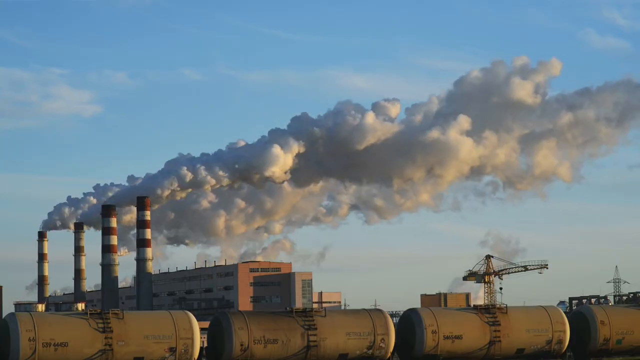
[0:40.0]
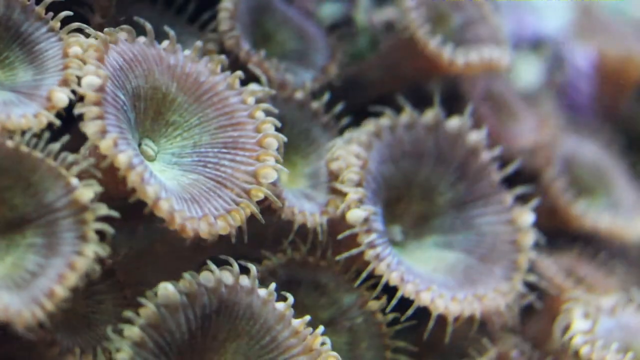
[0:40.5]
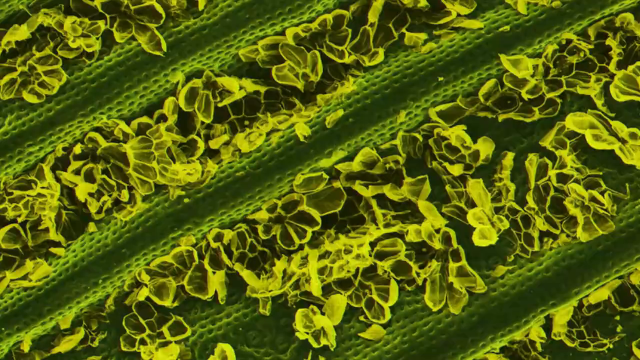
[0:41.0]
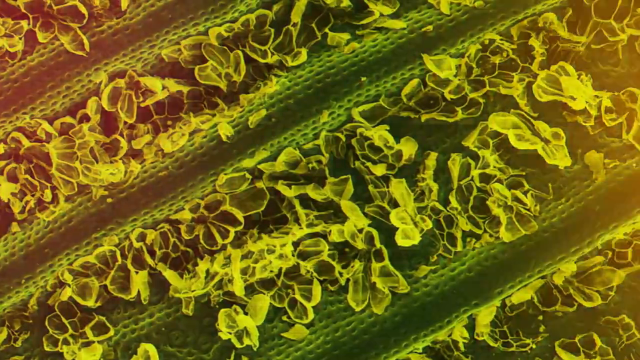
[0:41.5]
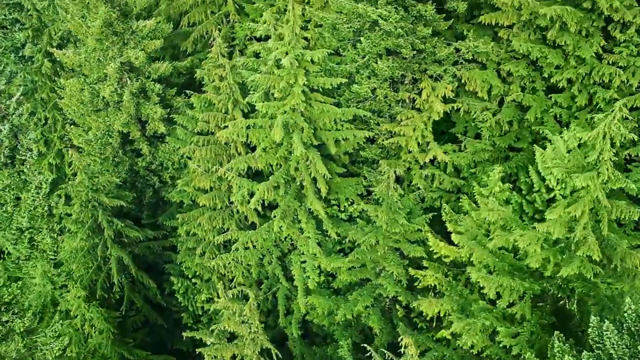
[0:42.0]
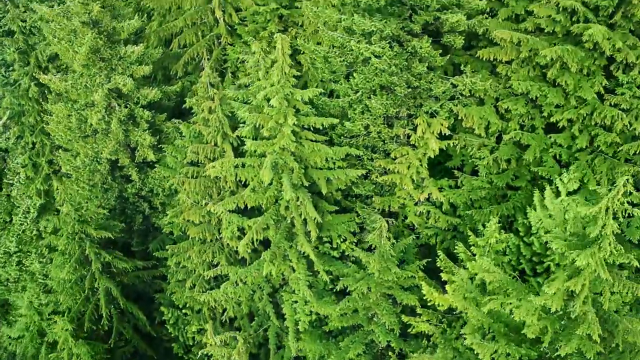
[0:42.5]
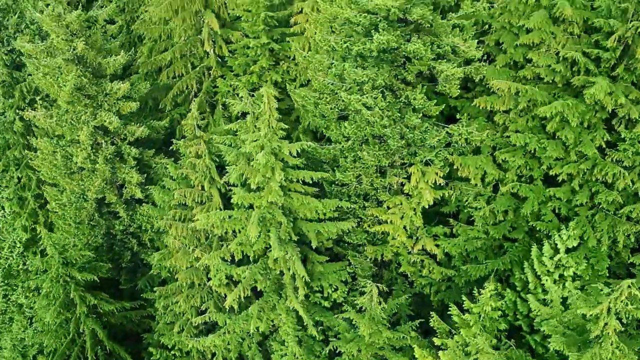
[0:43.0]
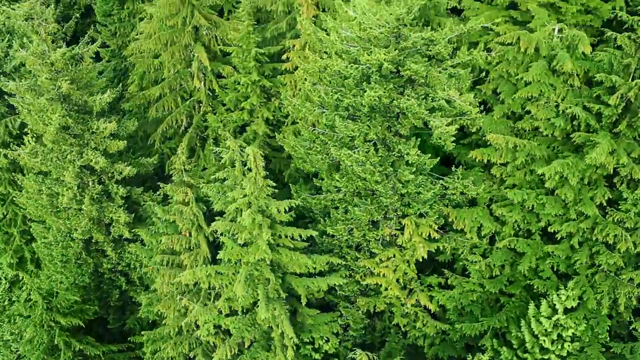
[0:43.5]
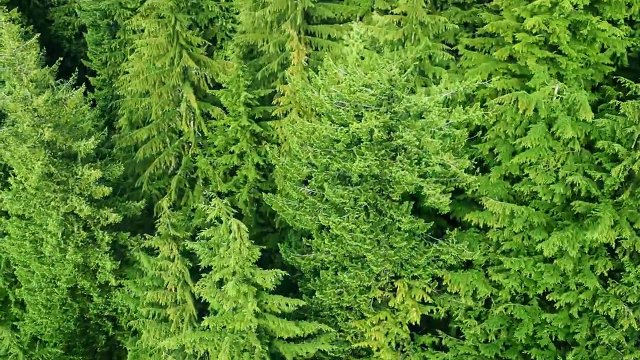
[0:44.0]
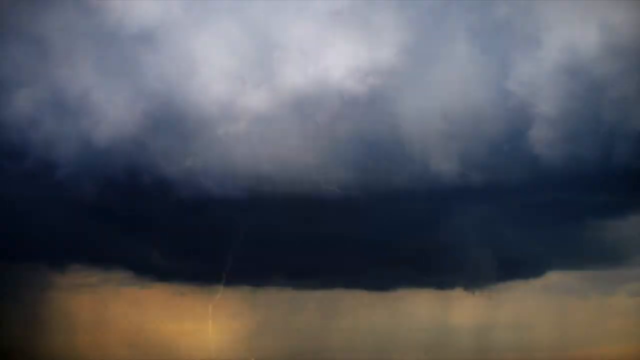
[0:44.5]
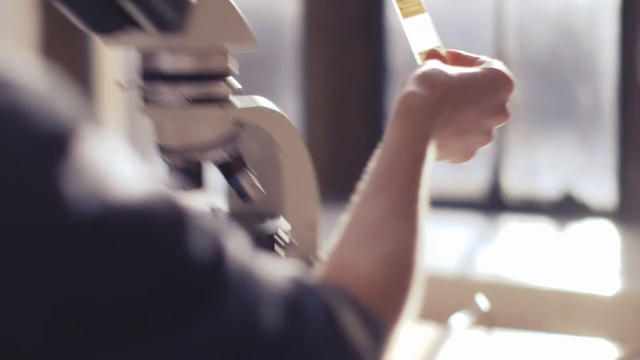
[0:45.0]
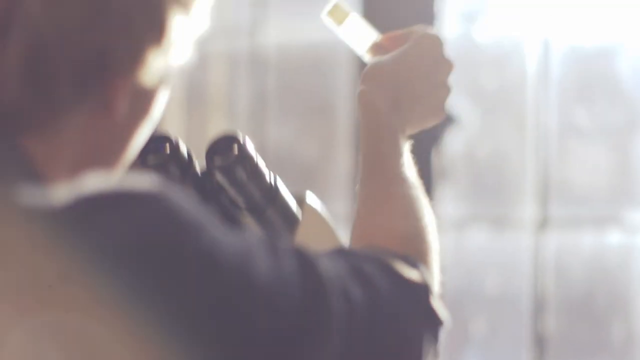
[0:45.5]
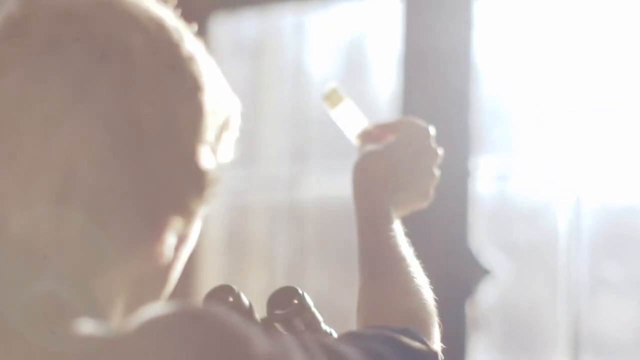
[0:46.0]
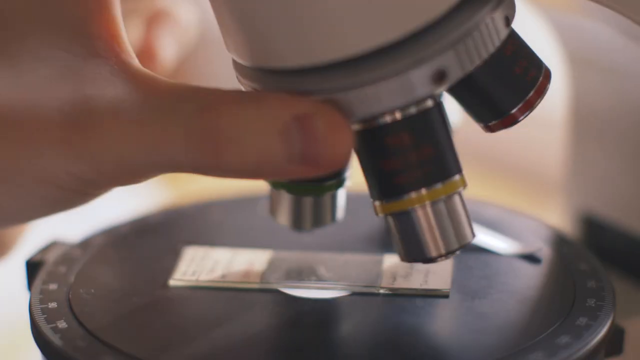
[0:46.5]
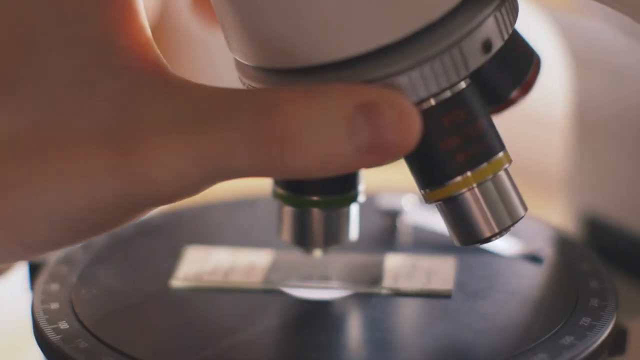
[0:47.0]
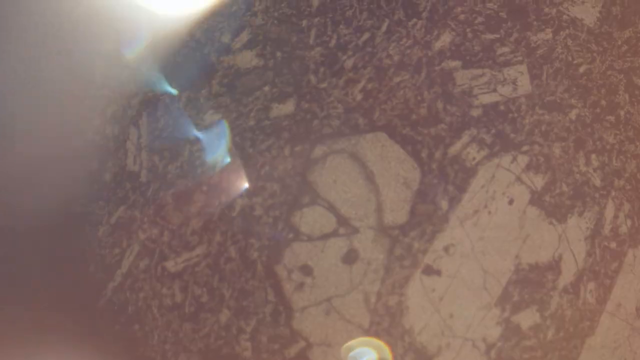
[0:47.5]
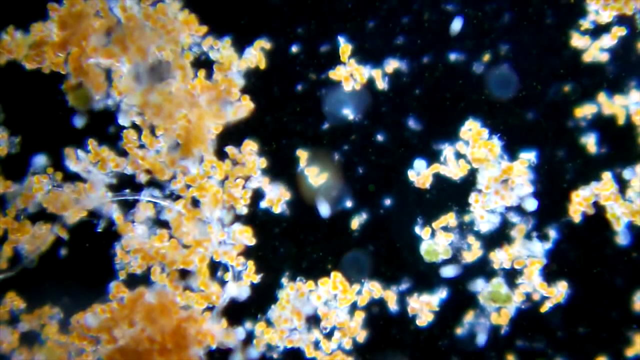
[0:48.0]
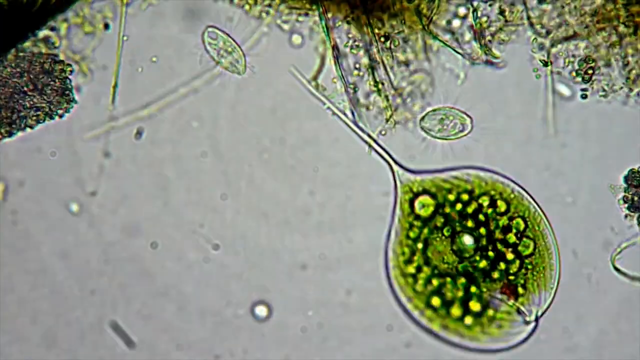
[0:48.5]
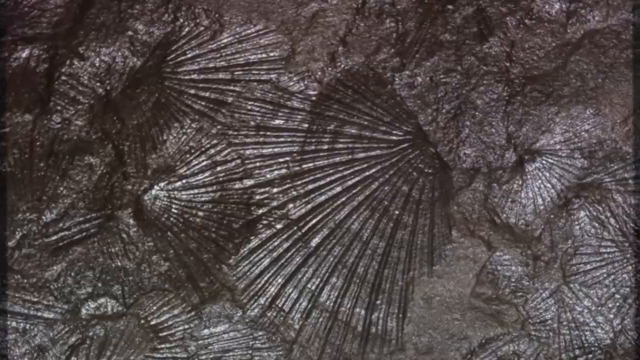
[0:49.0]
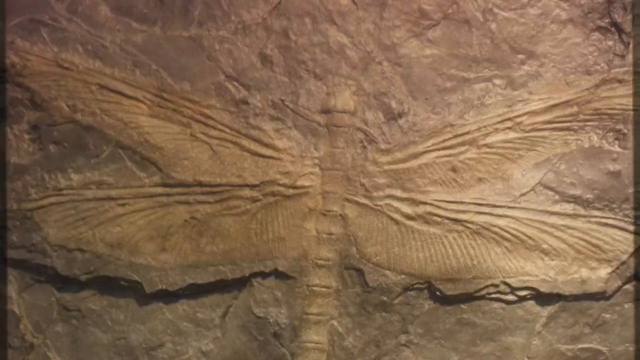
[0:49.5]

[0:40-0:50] A close-up shows what a leaf of a plant looks like, followed by an overhead view of a forest with lots of evergreen trees and then a lightning storm. The scene changes to somebody in a room with a microscope in front of them, holding a little piece of plastic up to the sun. They then use the microscope, turning the viewing part of the microscope at the bottom. Next there appear to be some cells and some amoebas, and then some fossils of butterflies.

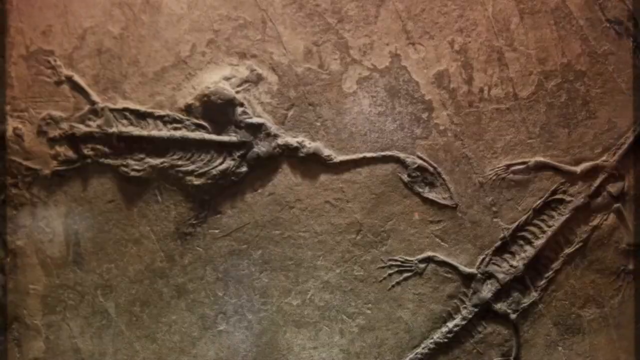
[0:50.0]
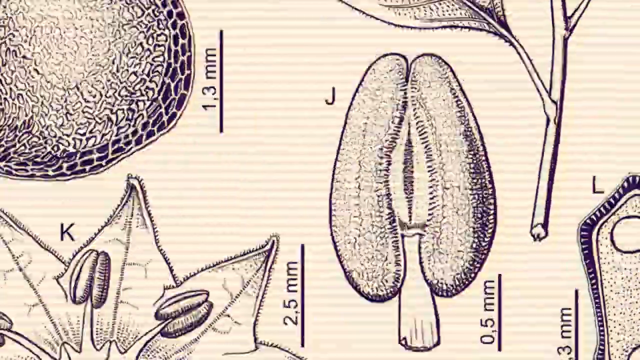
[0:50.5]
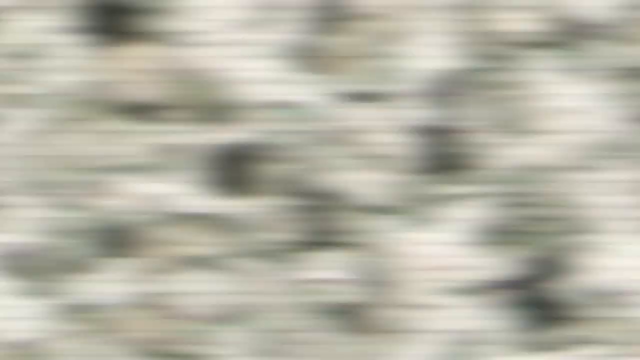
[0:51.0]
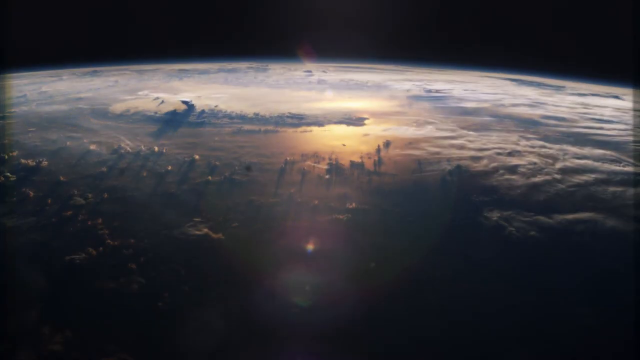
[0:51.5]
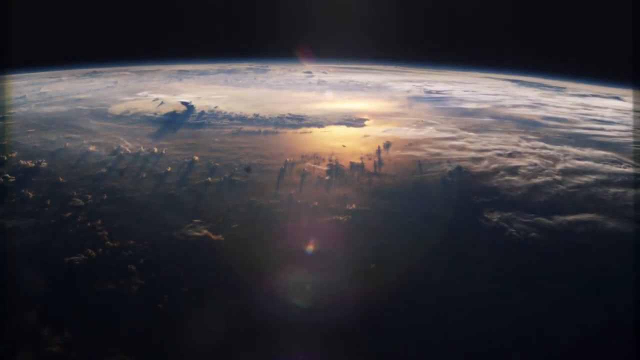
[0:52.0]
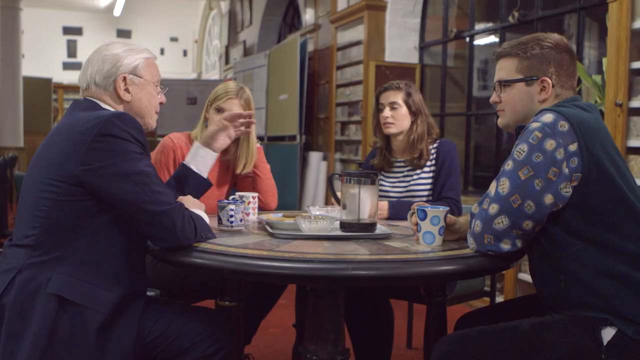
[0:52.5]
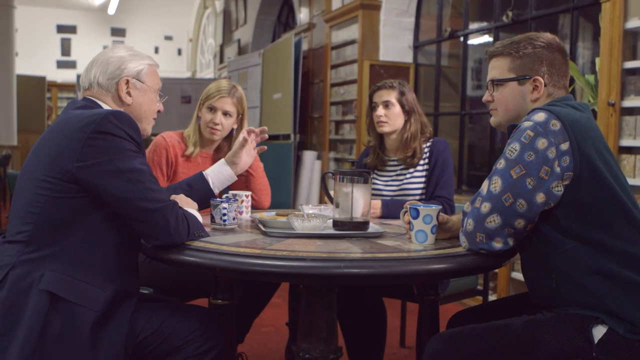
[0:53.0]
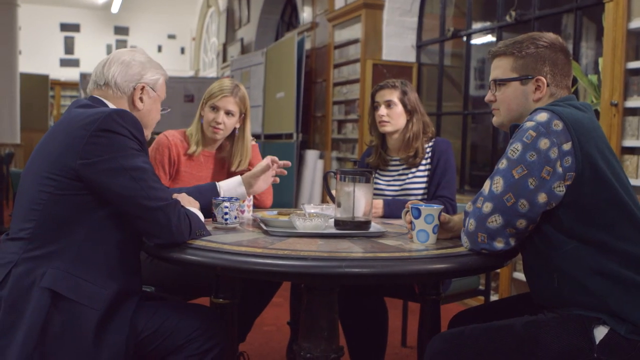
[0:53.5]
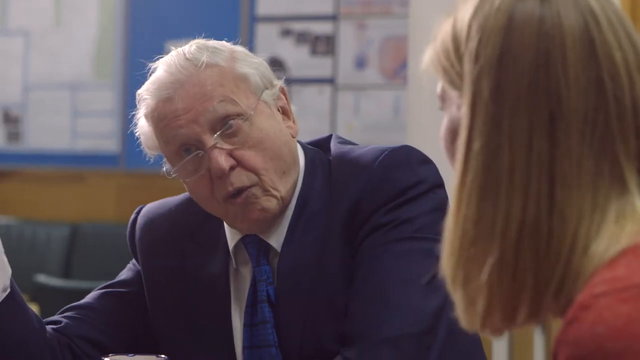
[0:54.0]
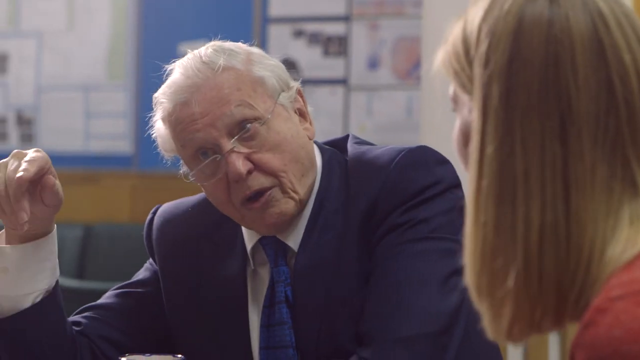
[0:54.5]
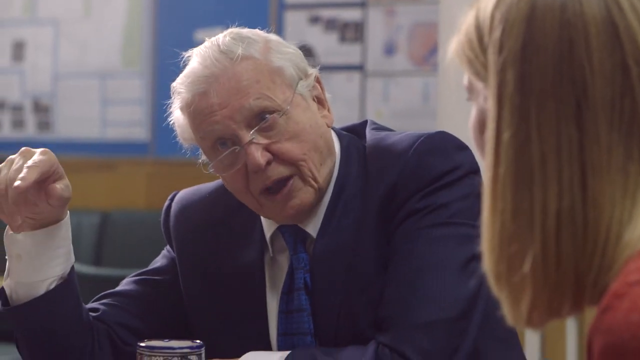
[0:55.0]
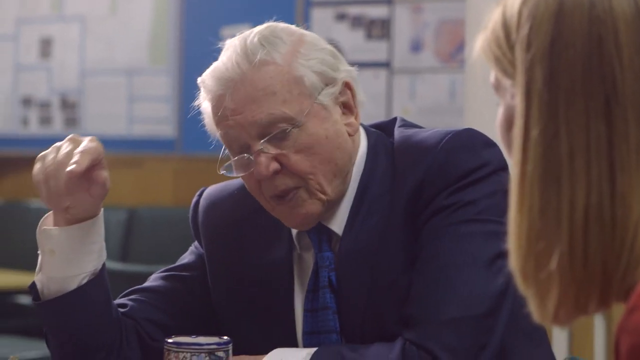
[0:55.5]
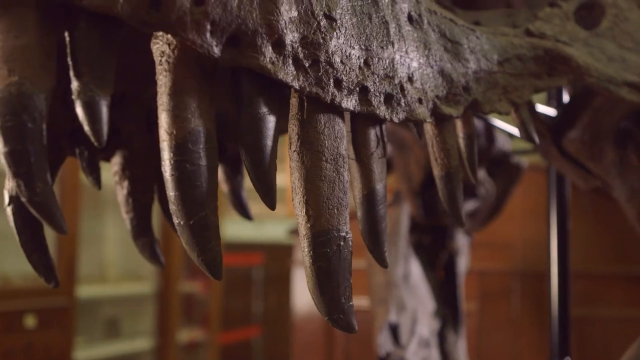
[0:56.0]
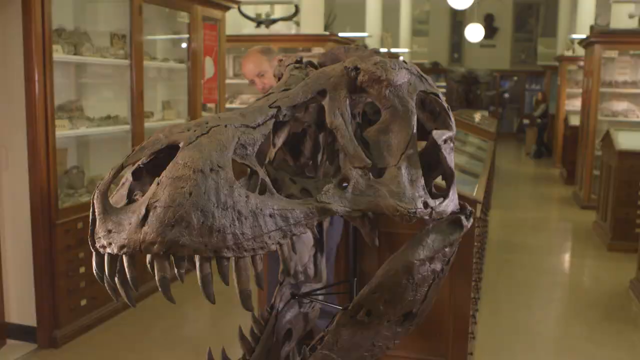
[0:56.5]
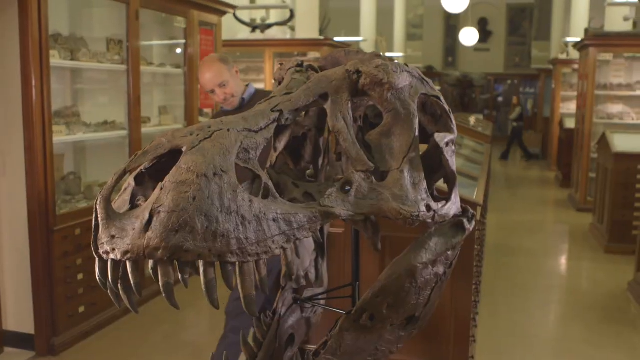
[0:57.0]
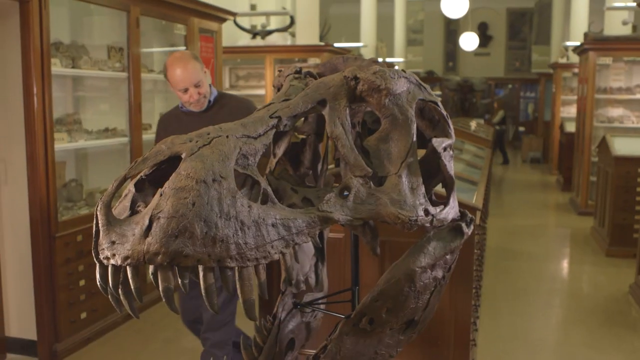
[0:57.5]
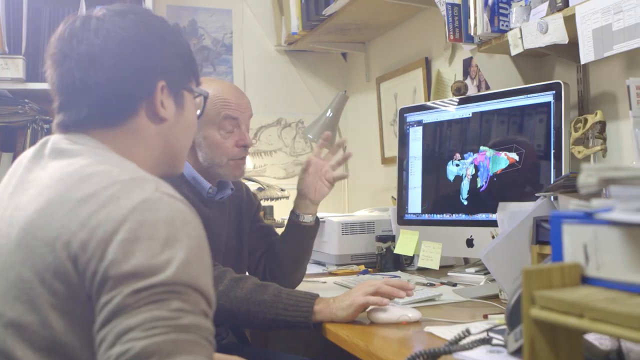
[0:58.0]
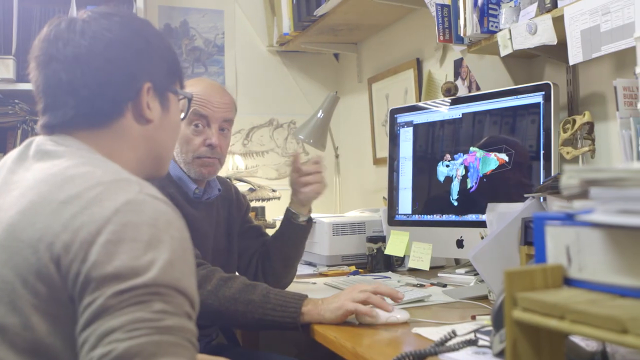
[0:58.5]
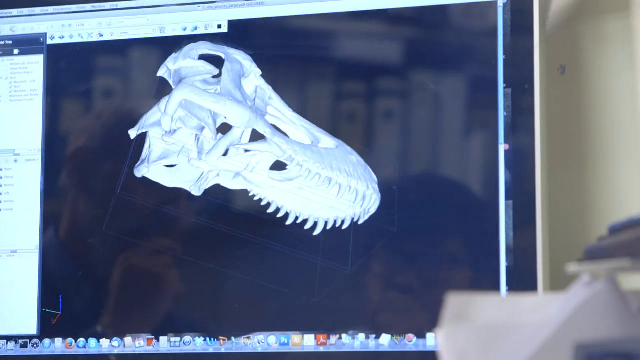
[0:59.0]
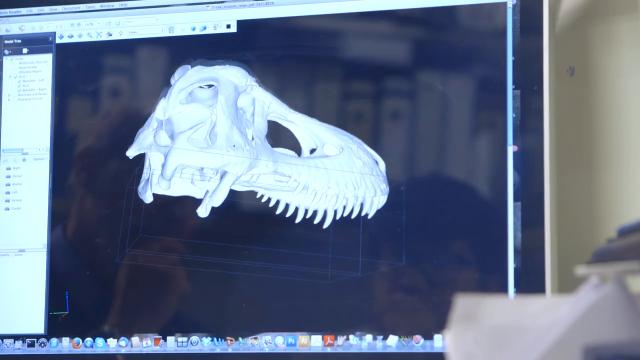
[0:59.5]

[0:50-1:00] Four people are at a round table with some coffee on it: a man on the left and three other people, two women and another man. The focus is on the man in the suit. The man on the left has gray hair, is older and wears a suit, and the other people look at him as he talks. The camera changes to a front view of that man, who wears glasses and a tie. Then some fossils of dinosaurs are shown inside a museum type of room. Two men at a computer look at a monitor showing a 3D model of a dinosaur head, which looks like a Tyrannosaurus rex head.